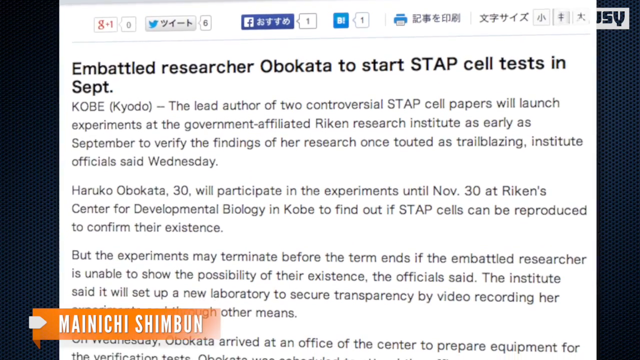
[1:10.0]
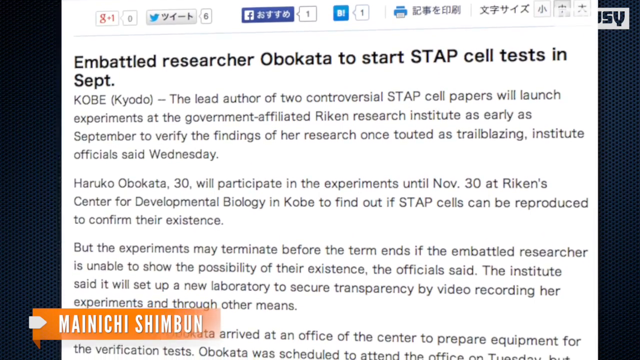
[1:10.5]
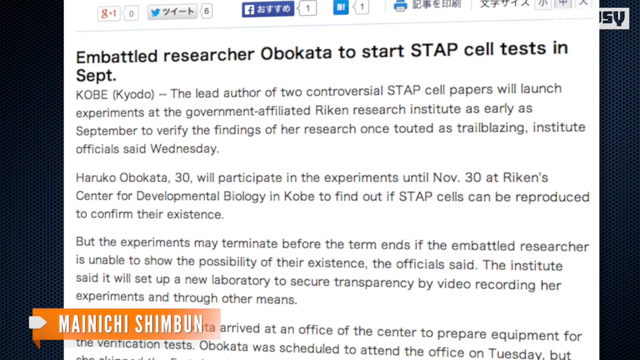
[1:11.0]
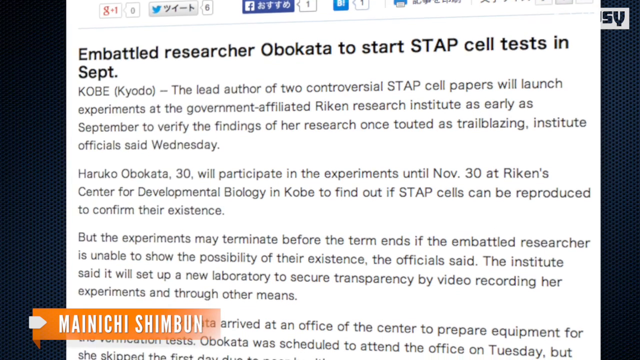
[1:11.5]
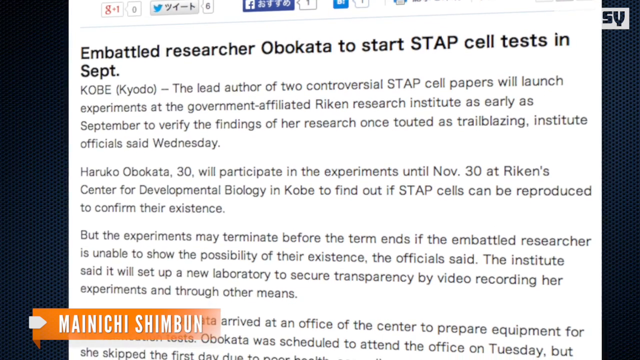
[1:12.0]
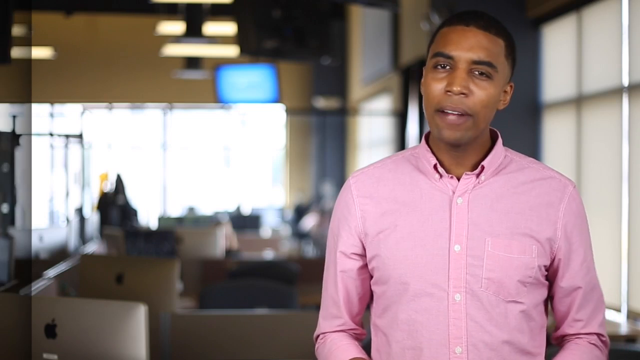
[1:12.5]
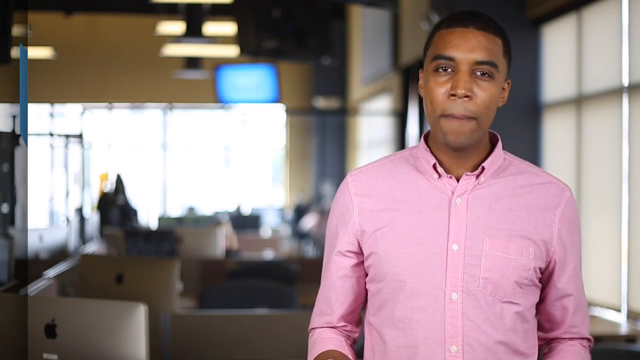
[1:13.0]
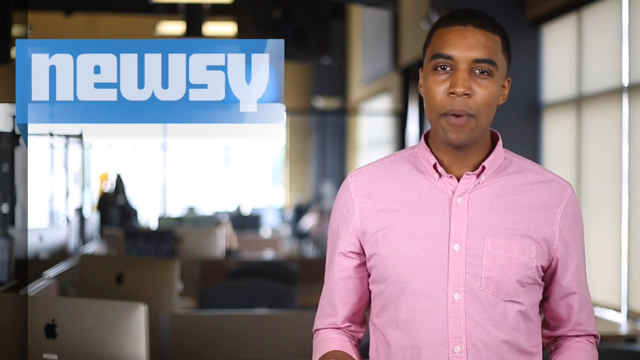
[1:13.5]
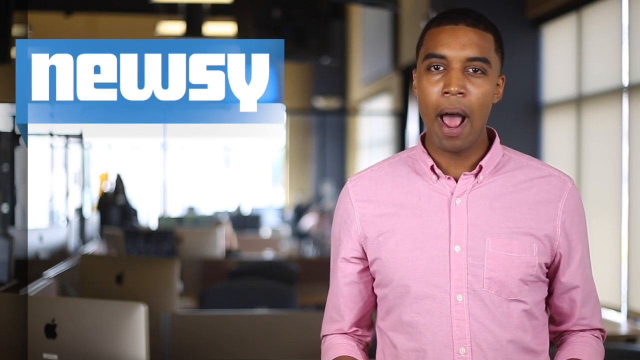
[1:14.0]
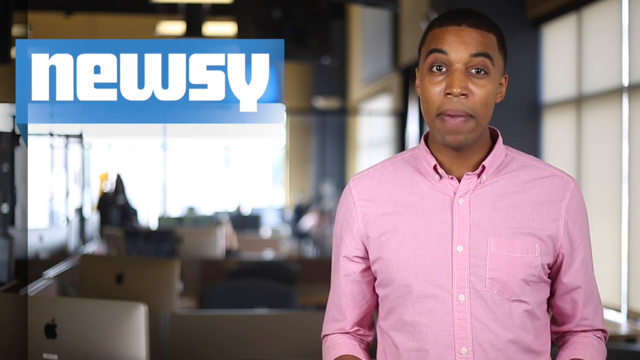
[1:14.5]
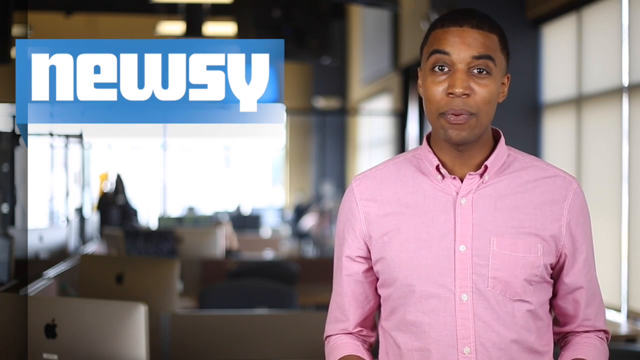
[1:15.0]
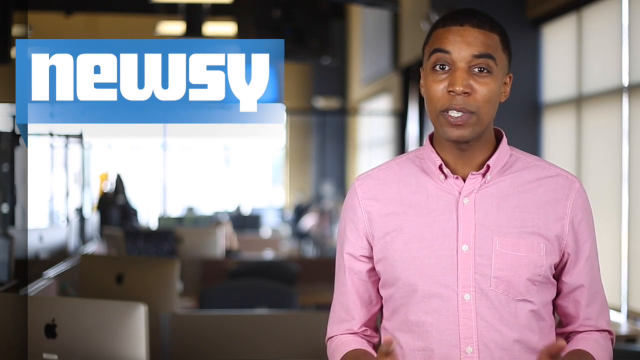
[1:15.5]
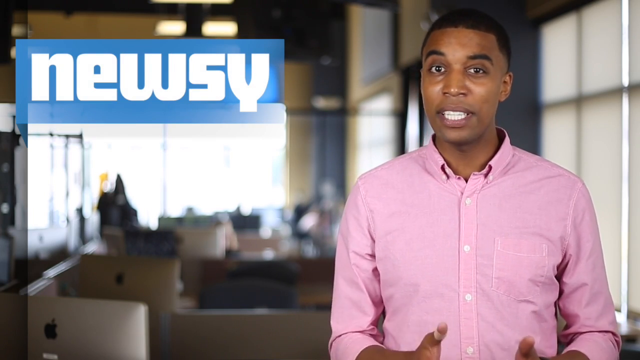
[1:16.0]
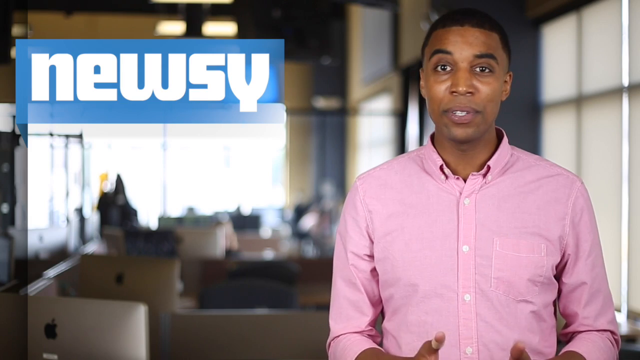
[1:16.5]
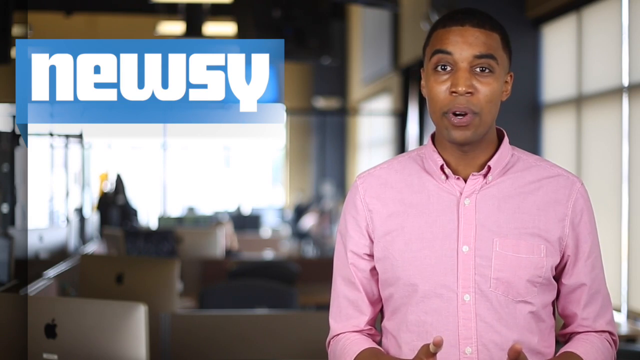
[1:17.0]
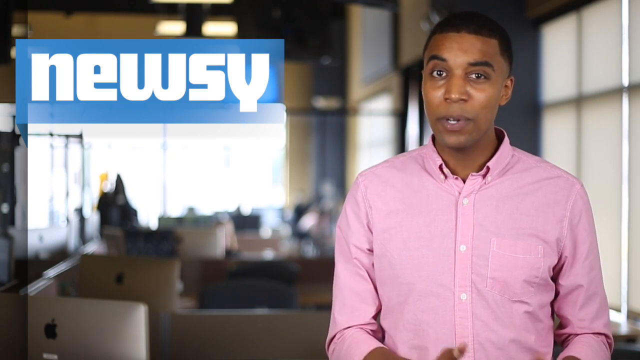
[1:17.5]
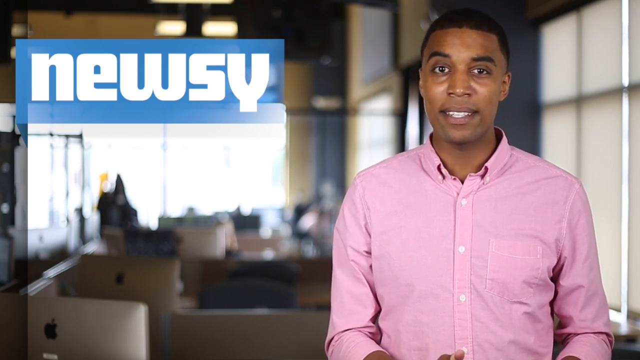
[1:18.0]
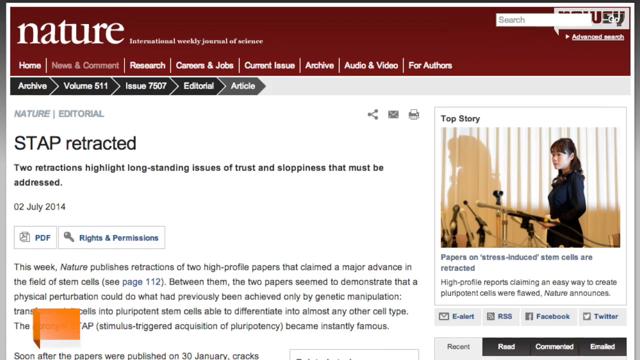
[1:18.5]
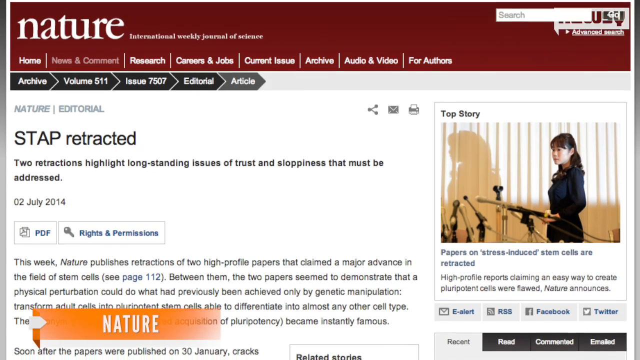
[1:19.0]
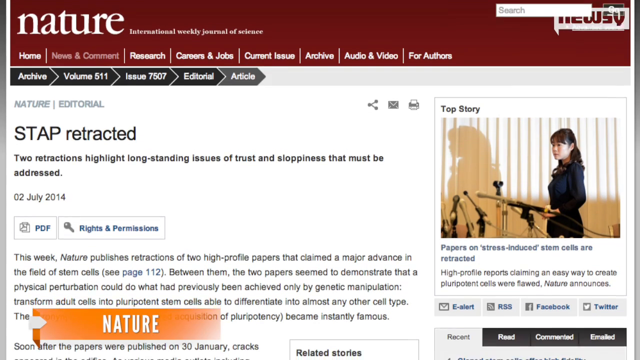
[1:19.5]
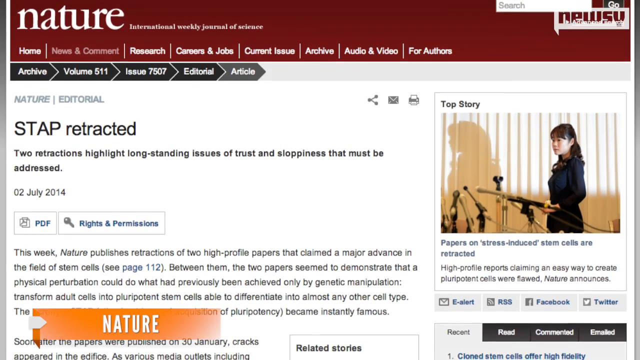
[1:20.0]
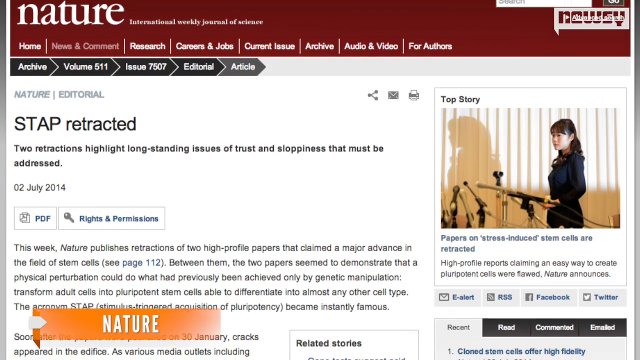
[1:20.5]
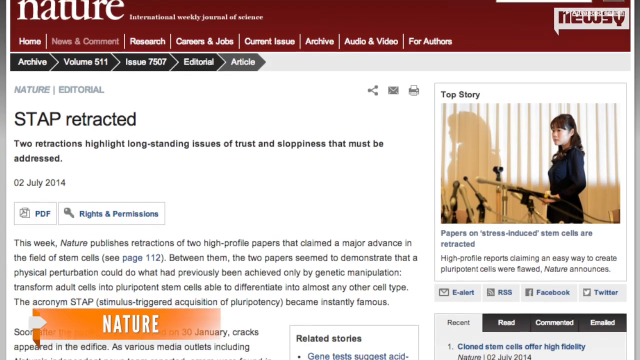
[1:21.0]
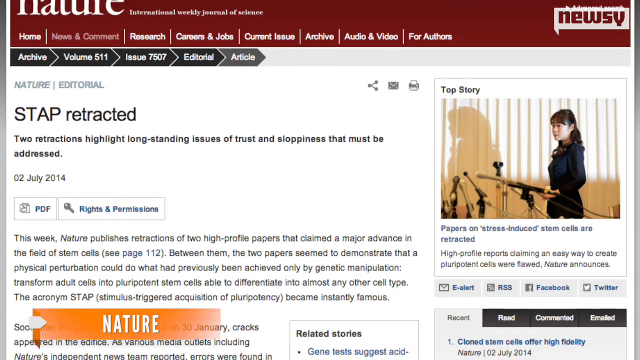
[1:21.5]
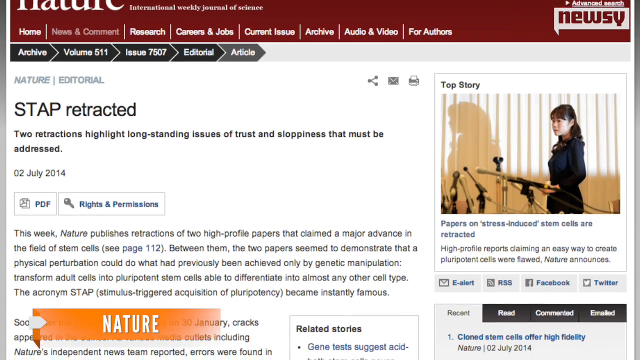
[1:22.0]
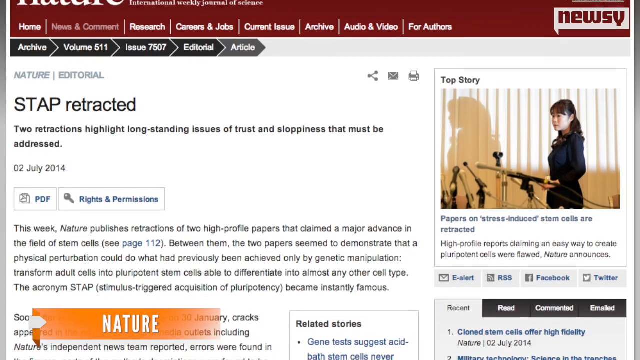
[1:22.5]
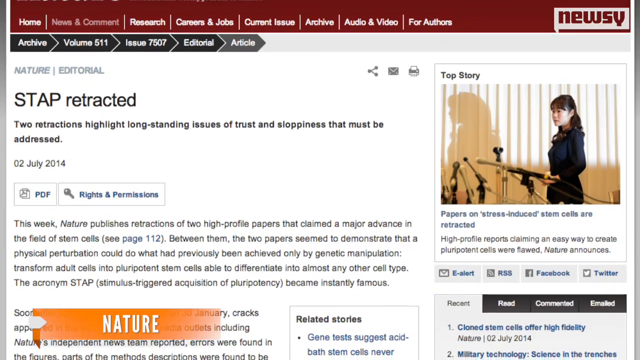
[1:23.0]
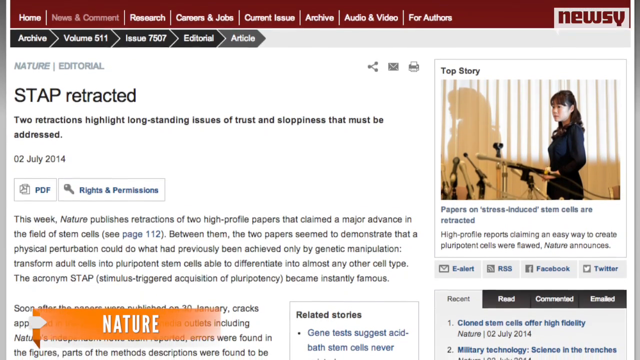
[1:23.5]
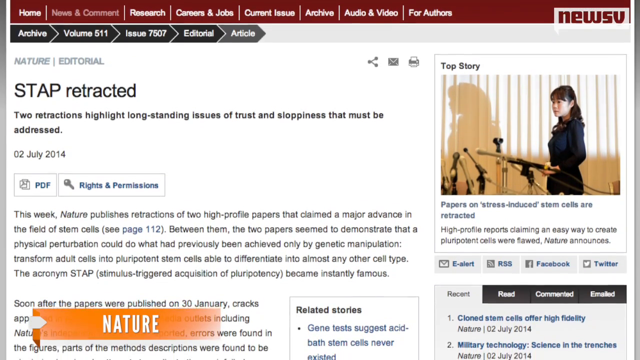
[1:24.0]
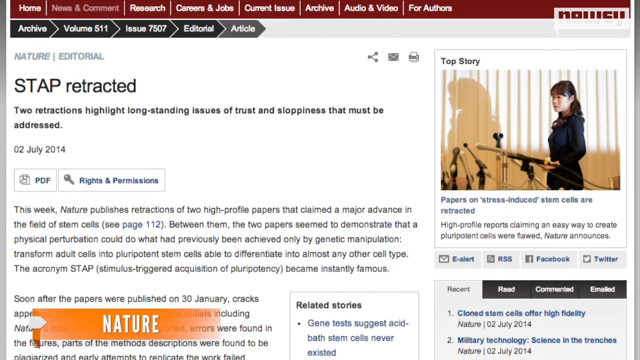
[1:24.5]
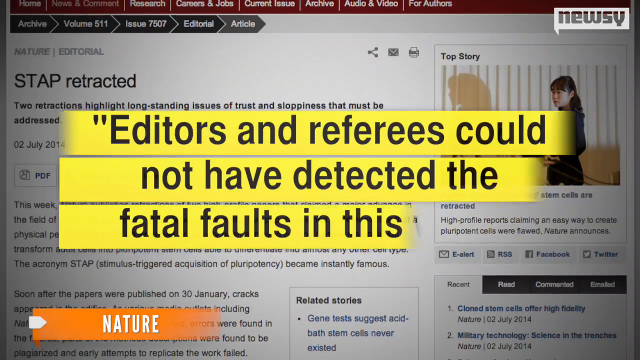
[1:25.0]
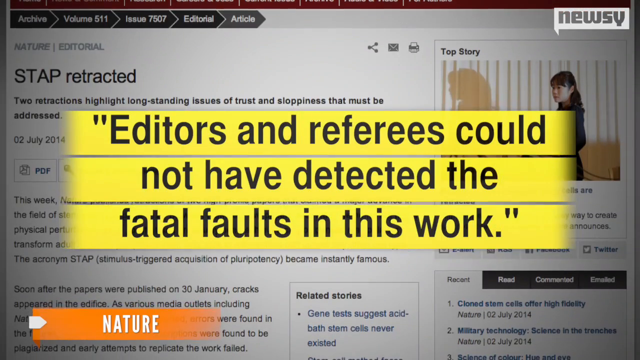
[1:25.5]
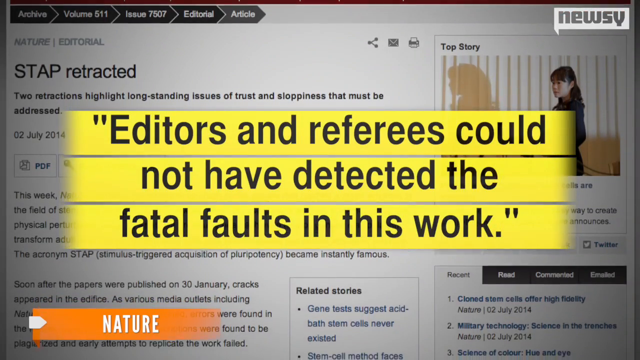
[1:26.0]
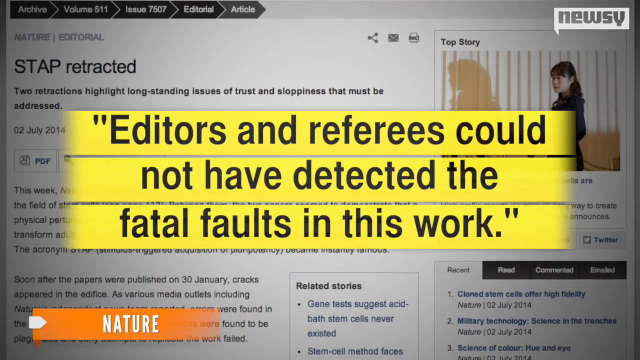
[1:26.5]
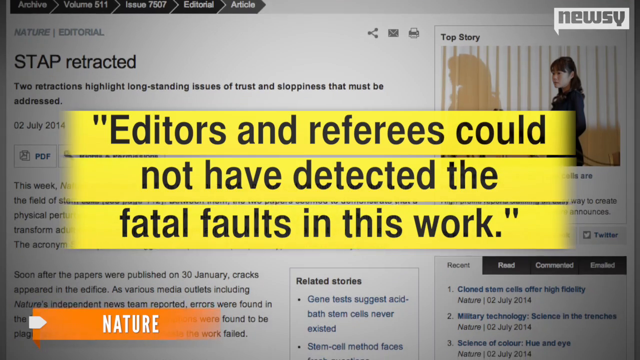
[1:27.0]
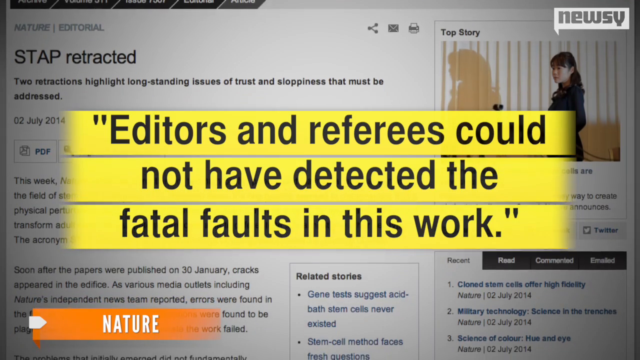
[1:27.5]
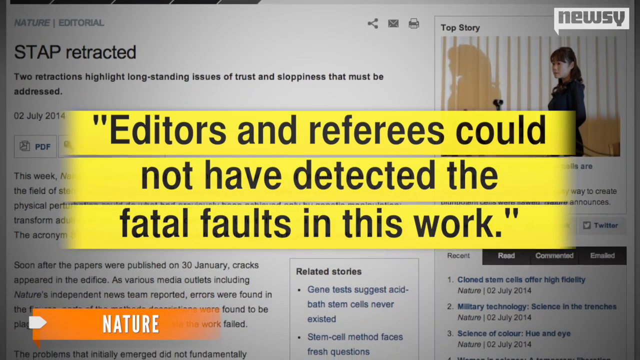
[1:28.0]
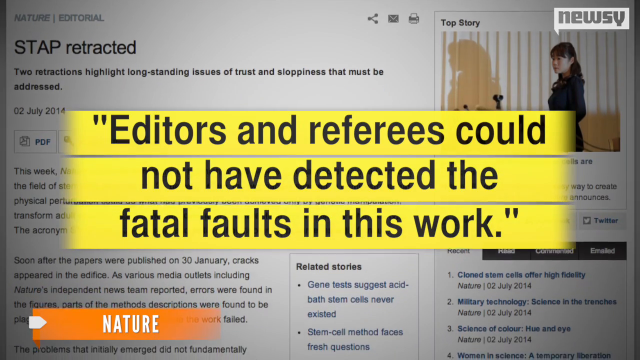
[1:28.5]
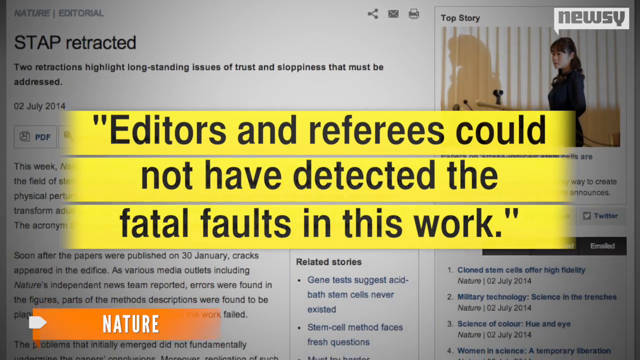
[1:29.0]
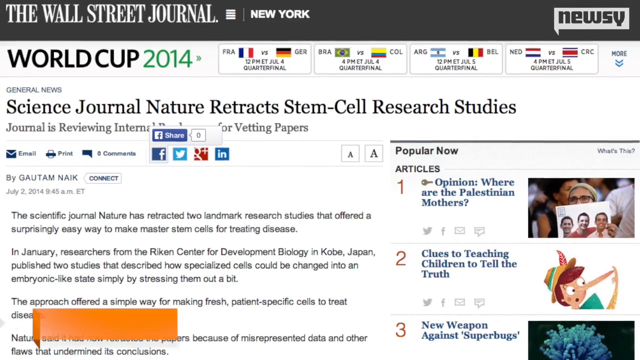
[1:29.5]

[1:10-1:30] The article "Embedded researcher Obokata to start STAP cell test in September" is shown. Its text reads "the lead author of the two controversial STAP cell papers will launch experiments at the government-affiliated Riken Research Institute as early as September" and says Obokata, 30, will participate in experiments until November 30th at Riken Center for Development Biology in Kobe. It also reads "The Institute said it will set up a new laboratory to secure transparency." Next, the Newsy news reporter, an African-American man in a pink shirt, is talking. Another article follows about STAP retractions, with text about "long-standing issues of trust and sloppiness that must be addressed," and a line reading "editors and referees could not have detected."